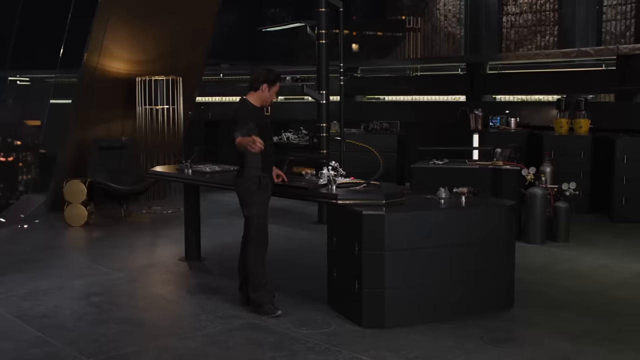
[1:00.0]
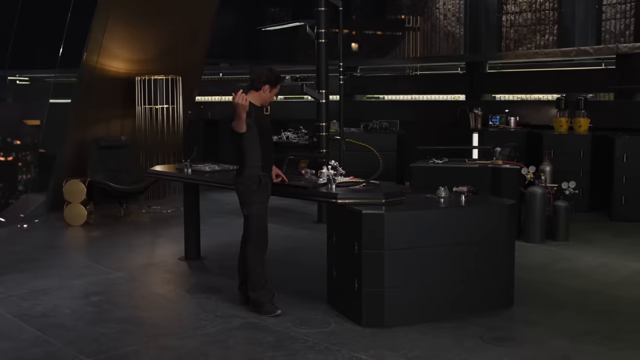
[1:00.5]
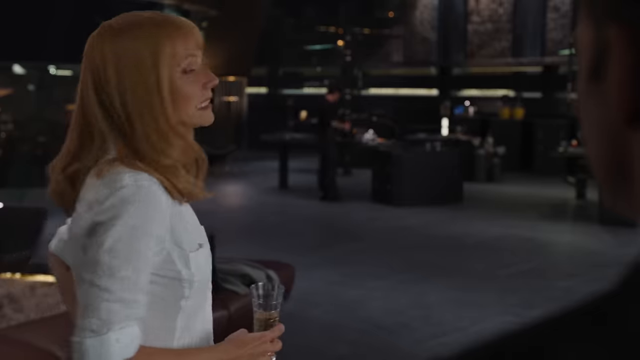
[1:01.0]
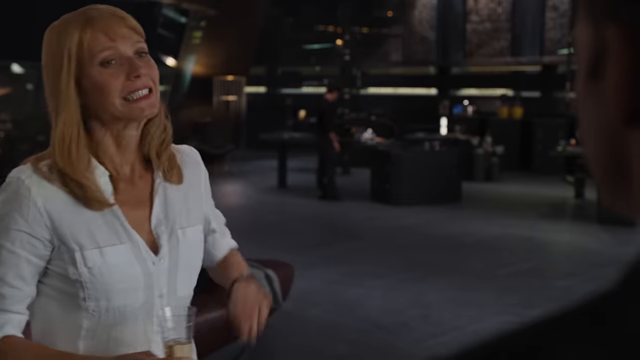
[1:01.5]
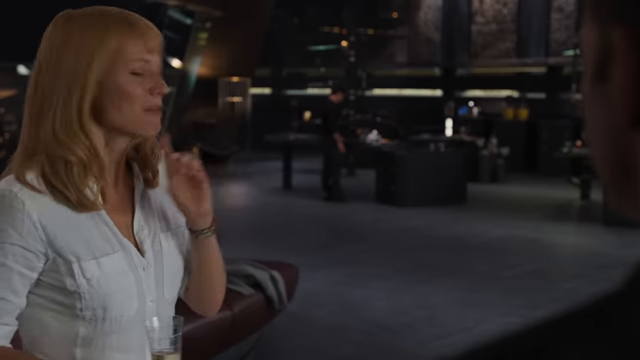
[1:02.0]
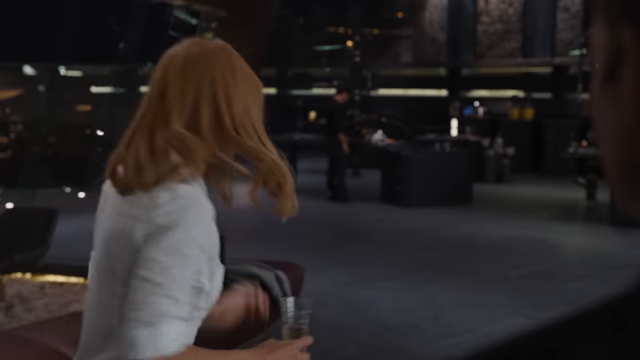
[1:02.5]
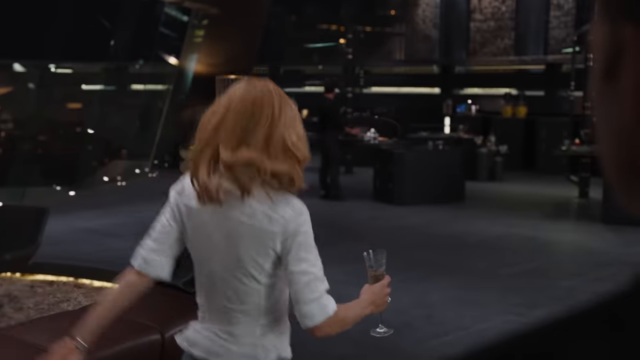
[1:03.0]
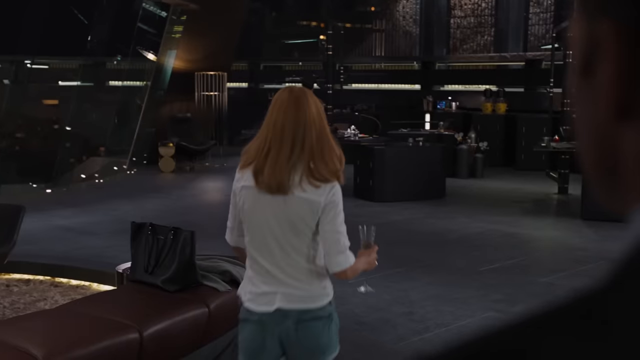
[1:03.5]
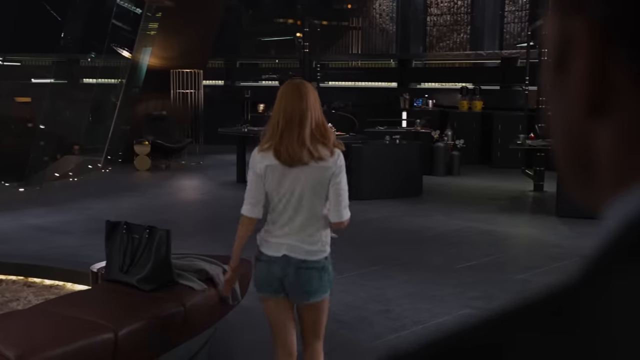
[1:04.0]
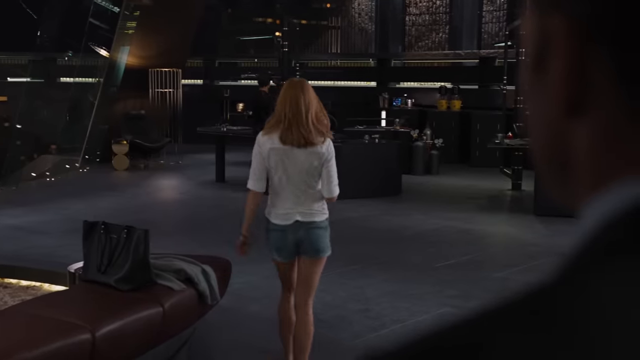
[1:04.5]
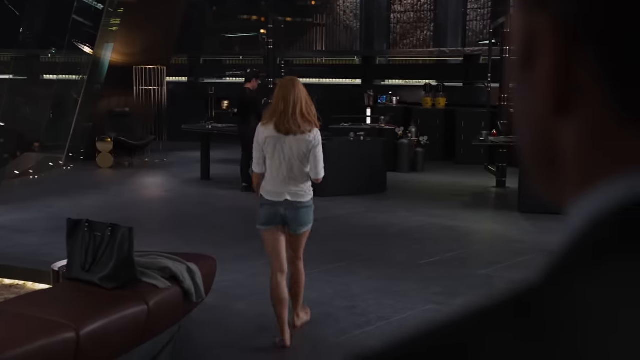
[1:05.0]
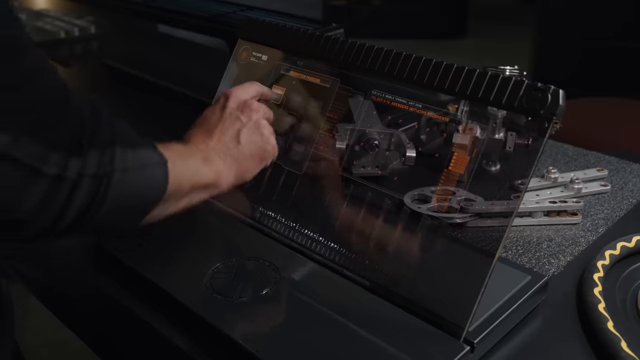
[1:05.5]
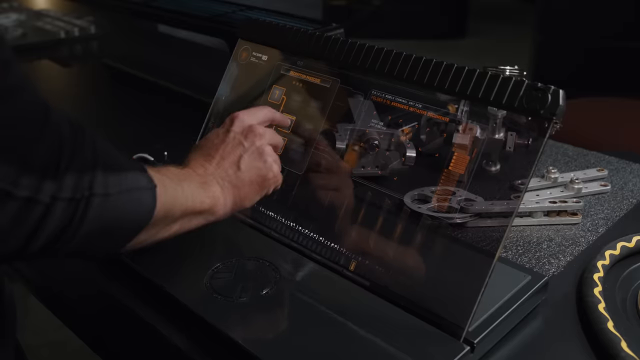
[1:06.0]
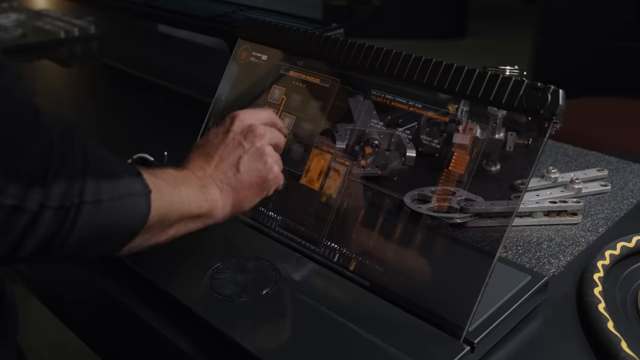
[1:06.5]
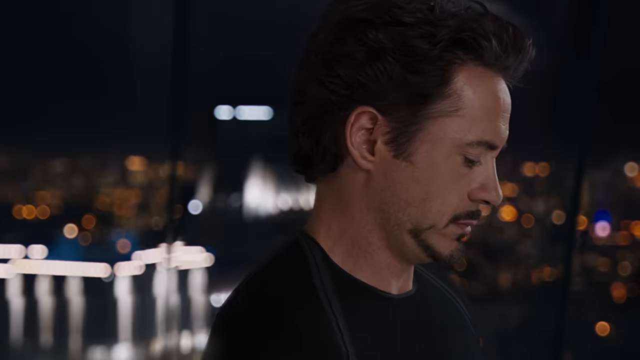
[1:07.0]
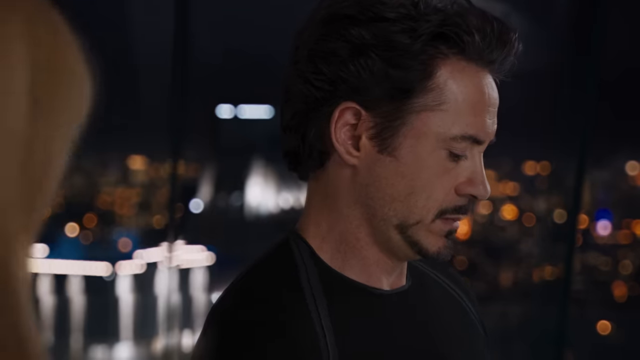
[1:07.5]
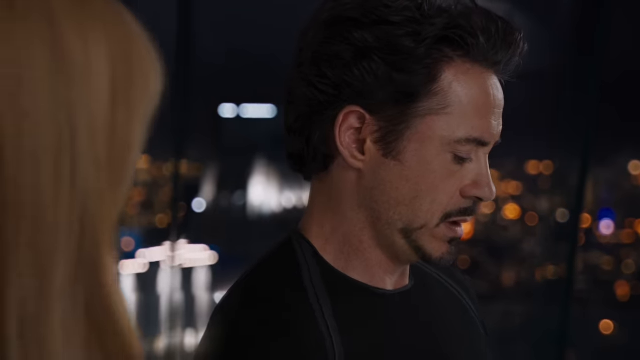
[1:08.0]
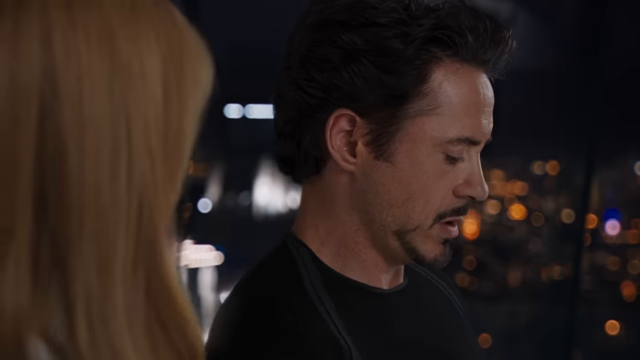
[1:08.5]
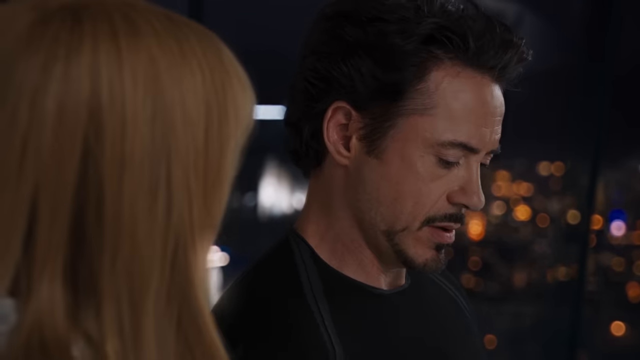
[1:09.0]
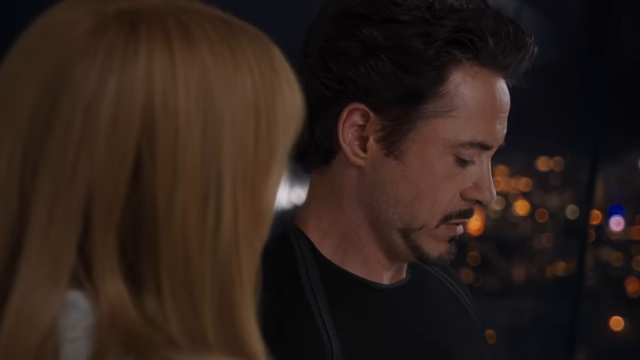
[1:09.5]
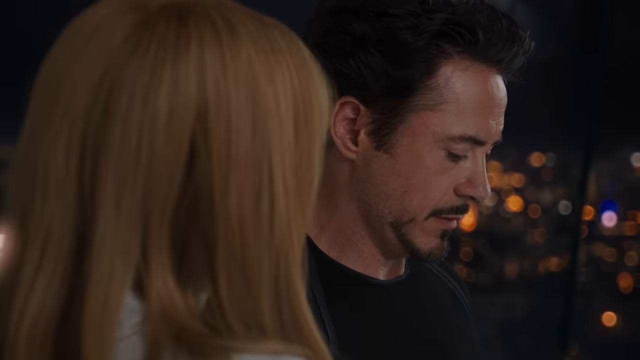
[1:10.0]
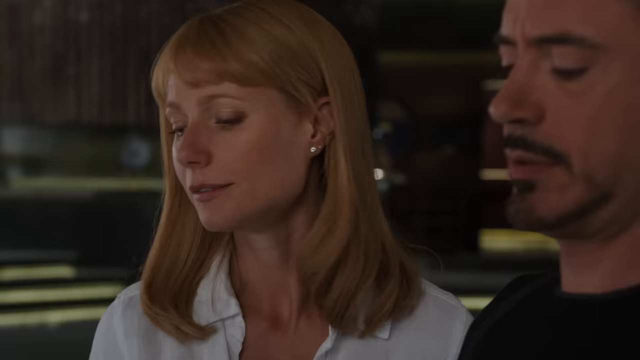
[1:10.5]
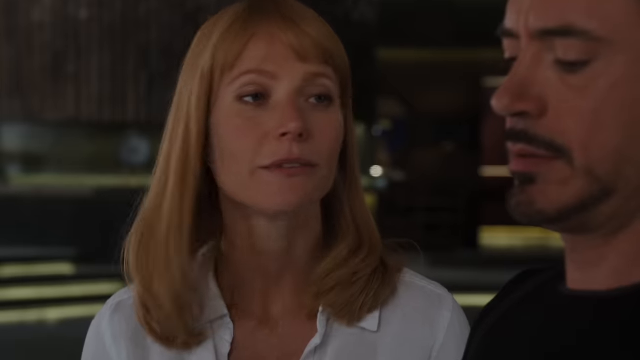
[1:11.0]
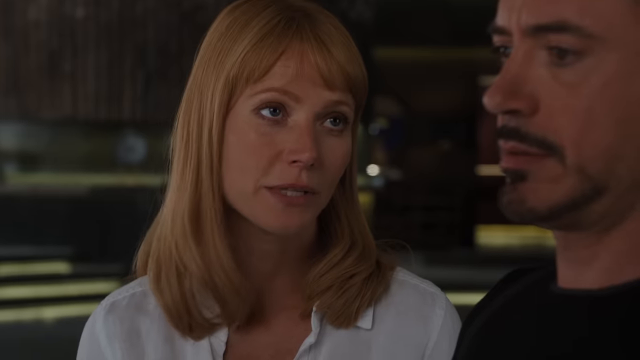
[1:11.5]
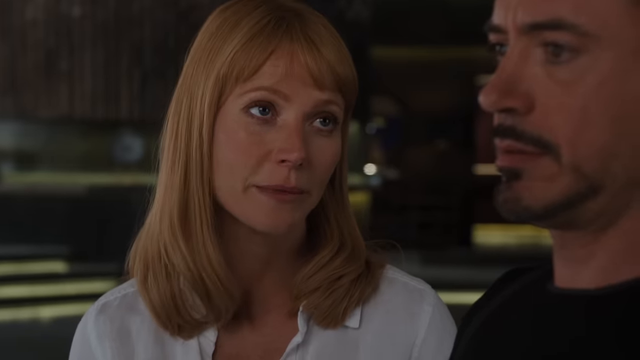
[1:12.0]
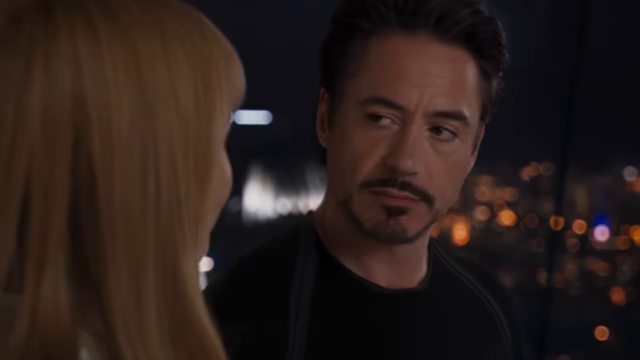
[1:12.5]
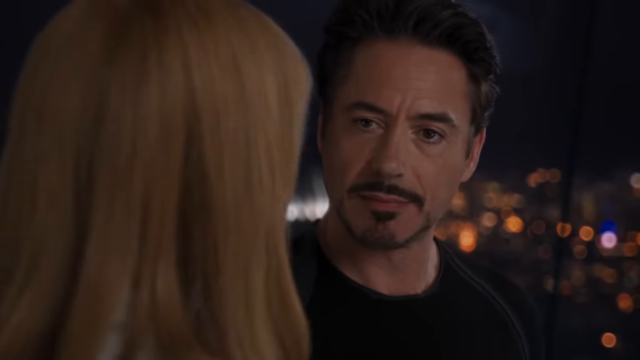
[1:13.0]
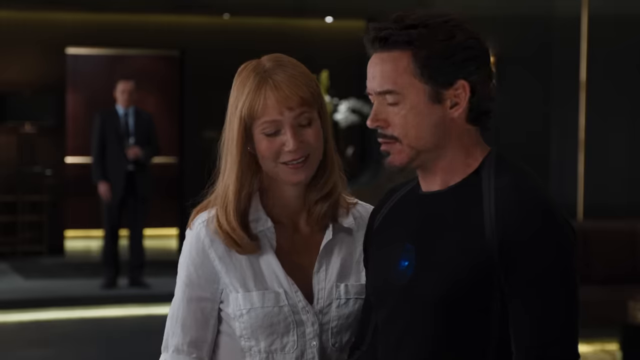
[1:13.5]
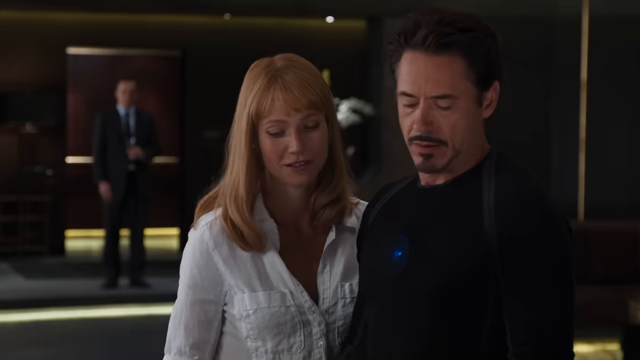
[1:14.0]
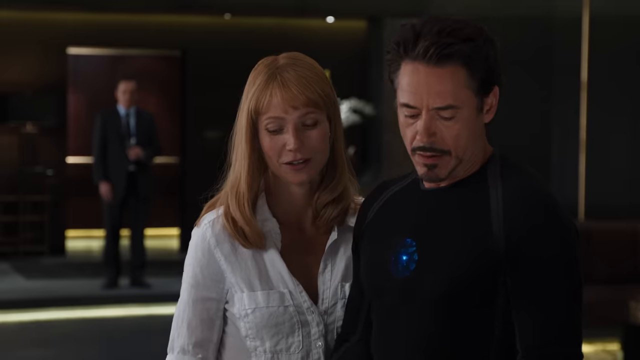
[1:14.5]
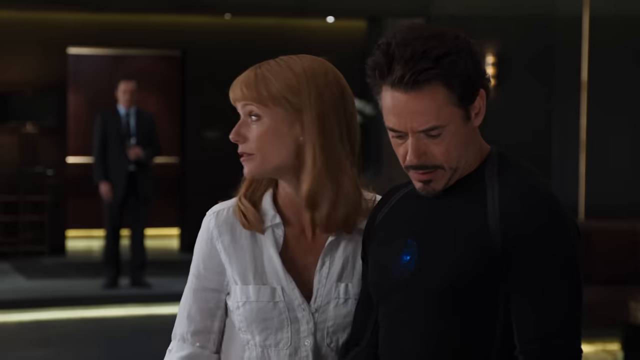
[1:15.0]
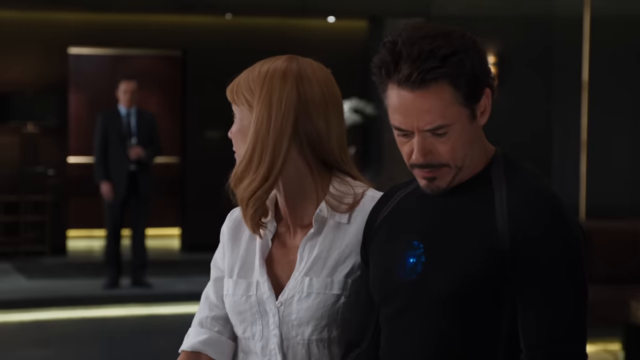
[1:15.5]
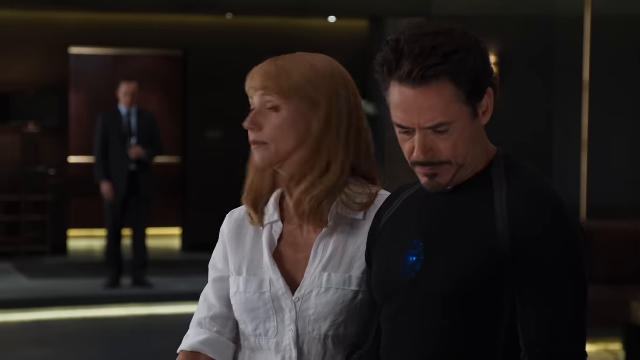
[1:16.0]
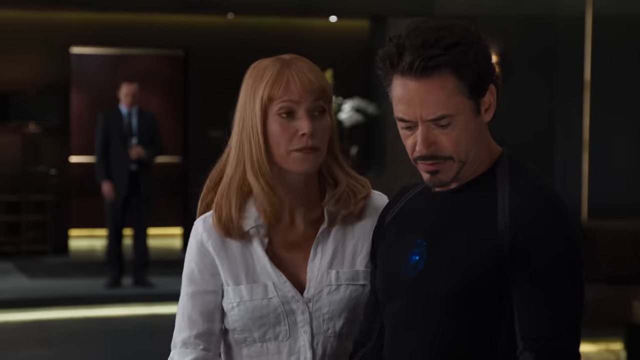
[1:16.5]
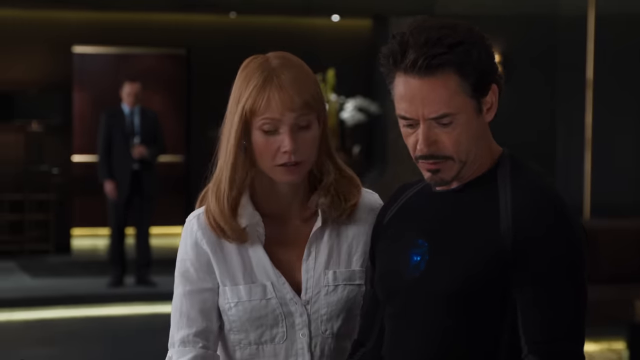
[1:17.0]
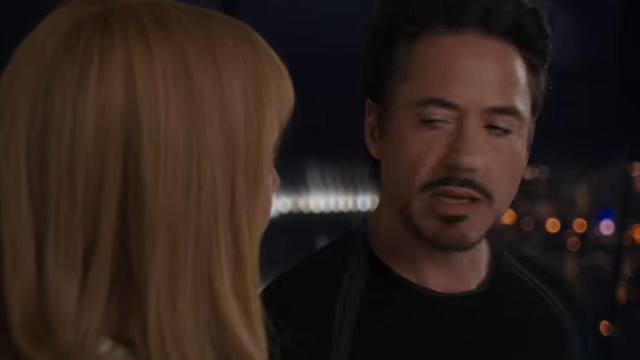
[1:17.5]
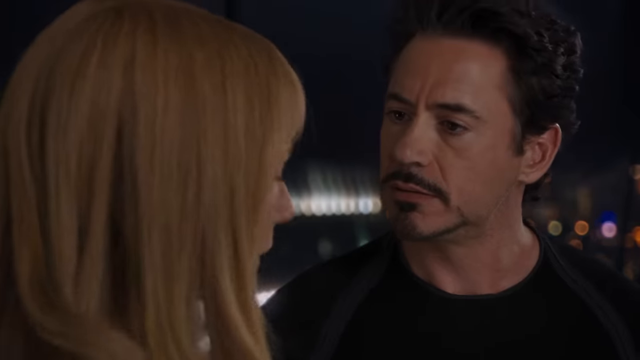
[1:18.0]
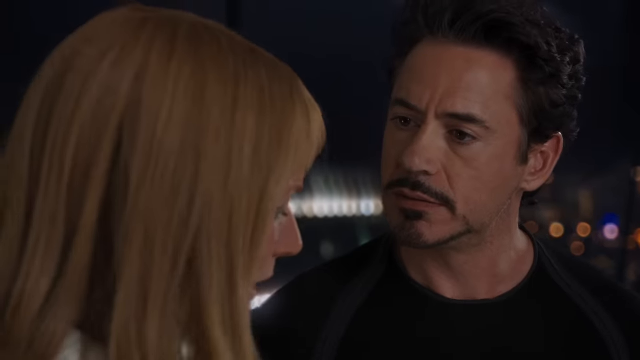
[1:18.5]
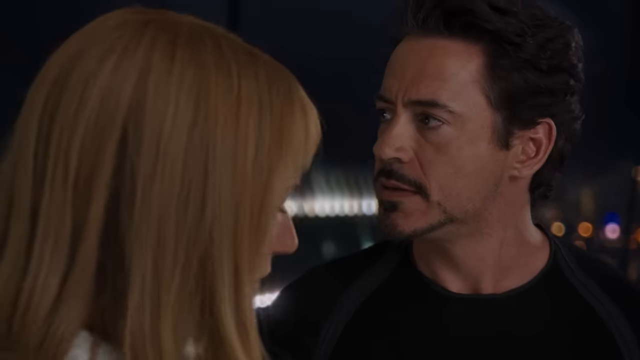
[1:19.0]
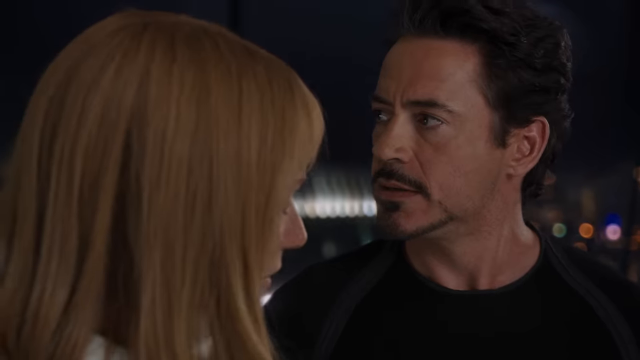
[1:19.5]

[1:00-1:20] Robert Downey Jr., in his mid-50s with black hair, dark eyes, a mustache and a goatee, wears a long black shirt and black pants. On the front of his shirt, in the middle, is a circular blue object with a triangle in the middle. His female friend, in her early to mid 40s, has red hair, dark eyes and a medium complexion; she wears a white top and blue jean shorts and drinks a glass of wine or champagne. Robert types on some type of touch screen, and his redhead friend joins him, smiling at him.